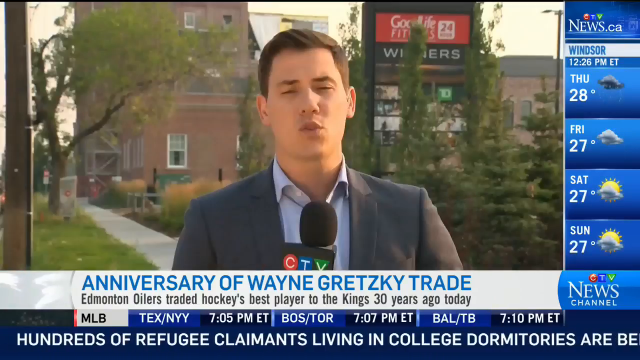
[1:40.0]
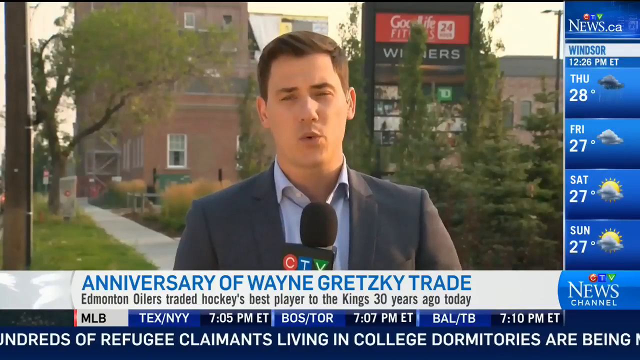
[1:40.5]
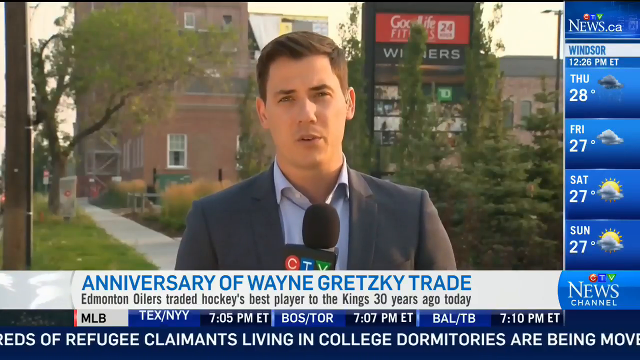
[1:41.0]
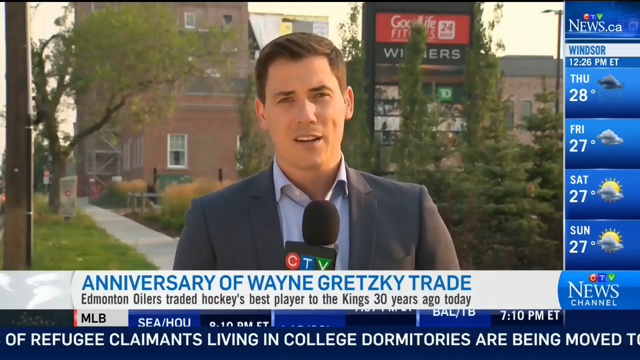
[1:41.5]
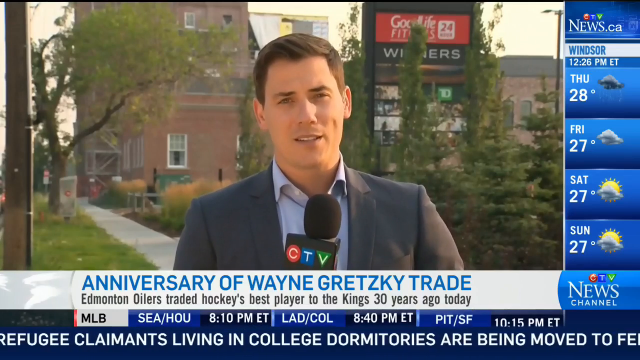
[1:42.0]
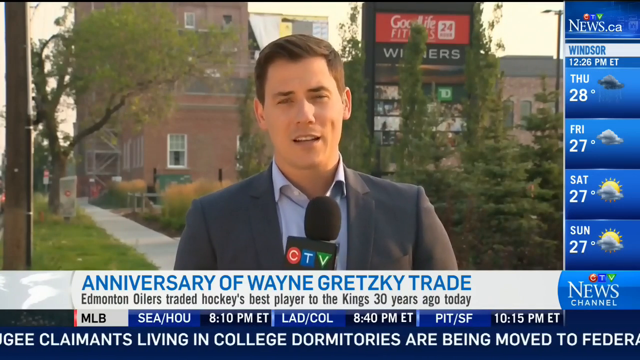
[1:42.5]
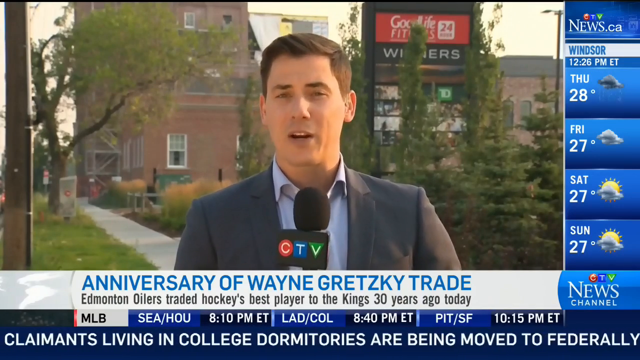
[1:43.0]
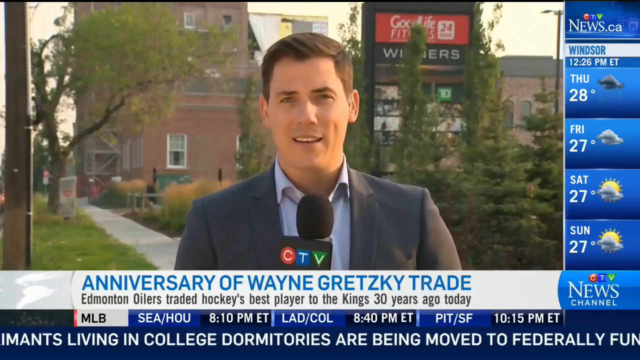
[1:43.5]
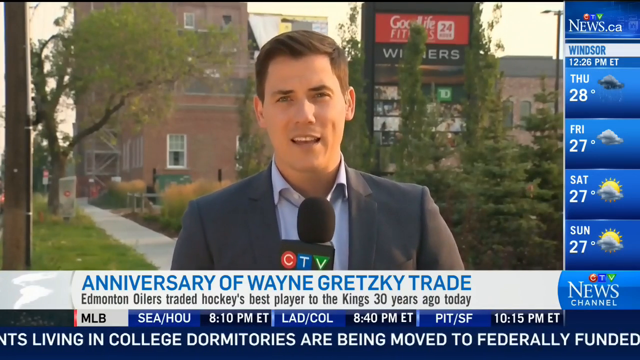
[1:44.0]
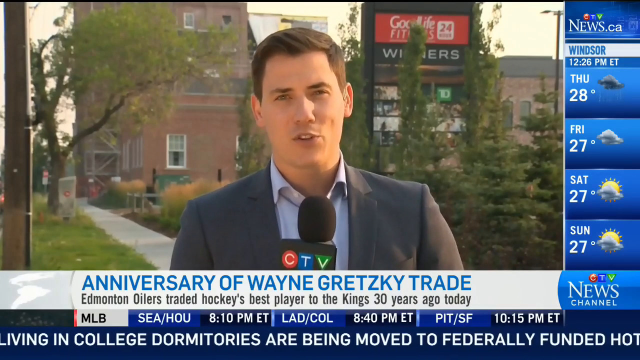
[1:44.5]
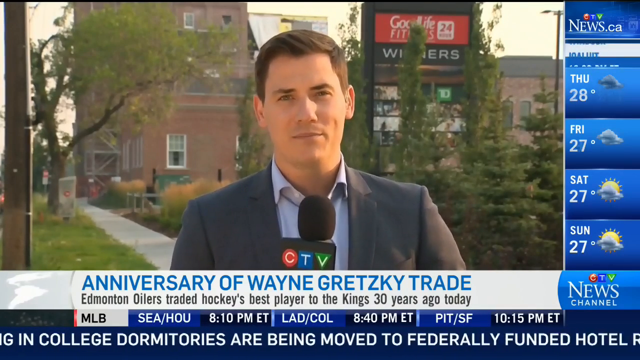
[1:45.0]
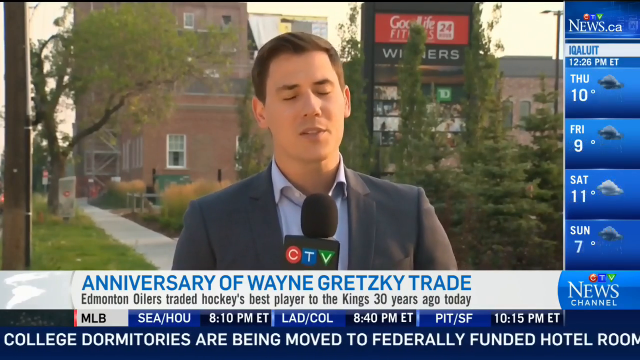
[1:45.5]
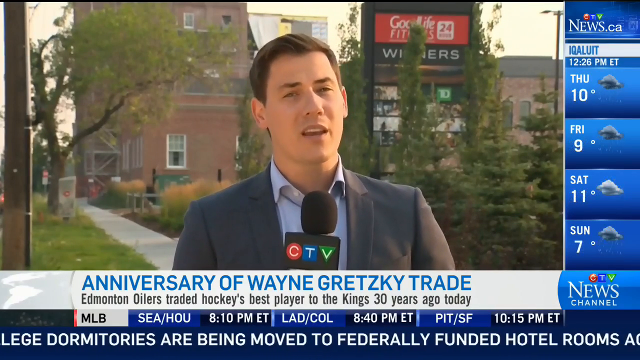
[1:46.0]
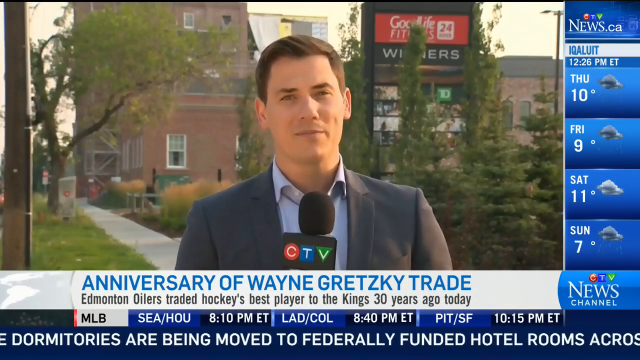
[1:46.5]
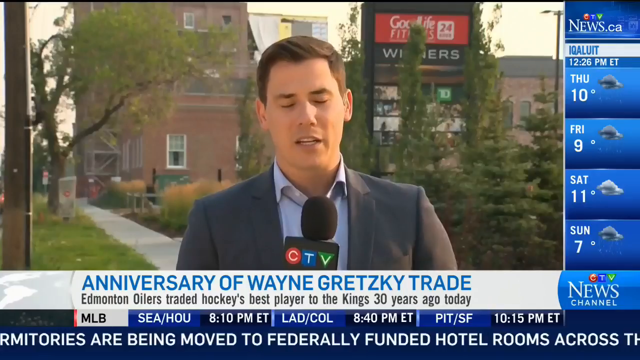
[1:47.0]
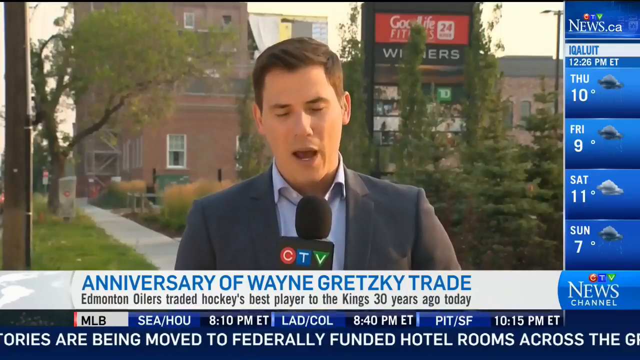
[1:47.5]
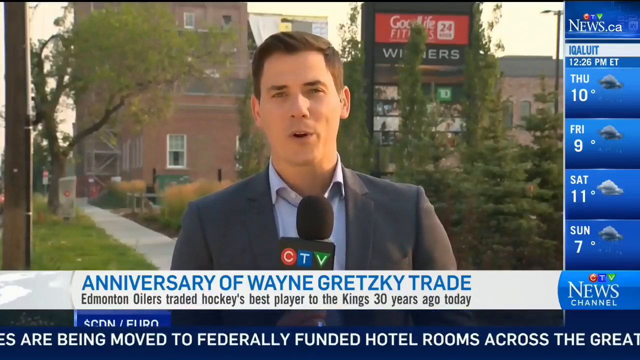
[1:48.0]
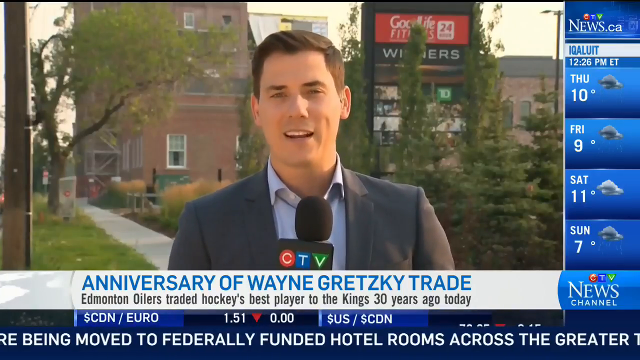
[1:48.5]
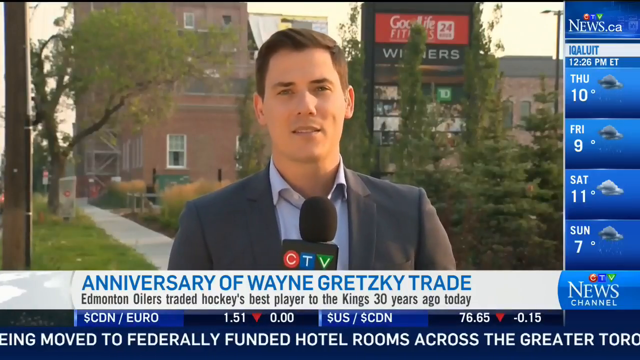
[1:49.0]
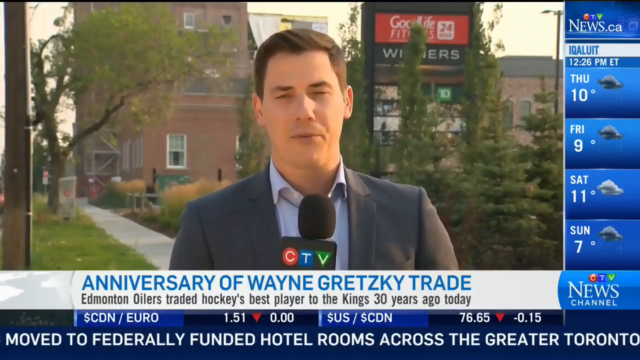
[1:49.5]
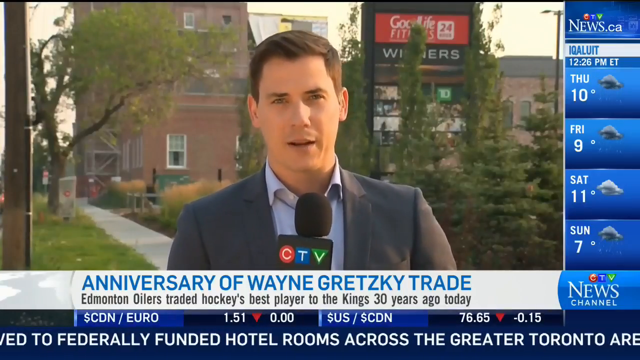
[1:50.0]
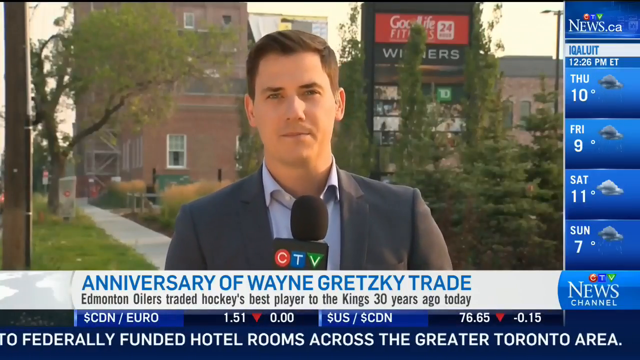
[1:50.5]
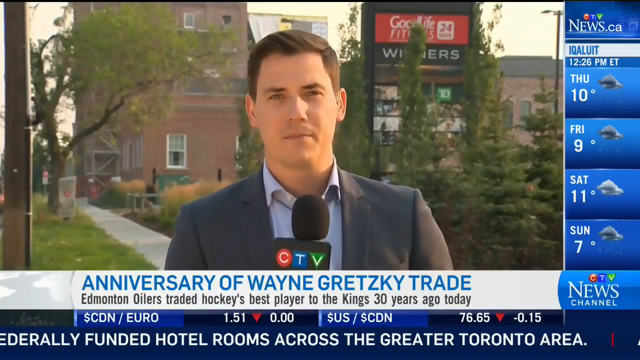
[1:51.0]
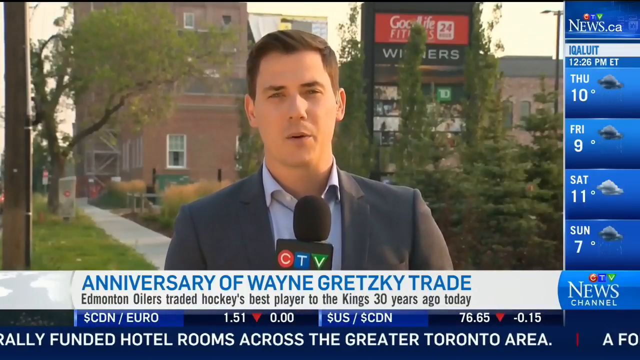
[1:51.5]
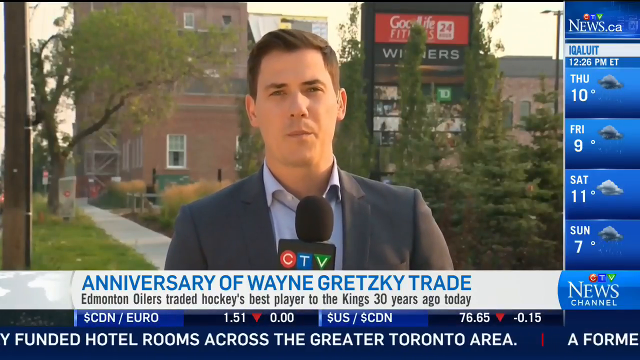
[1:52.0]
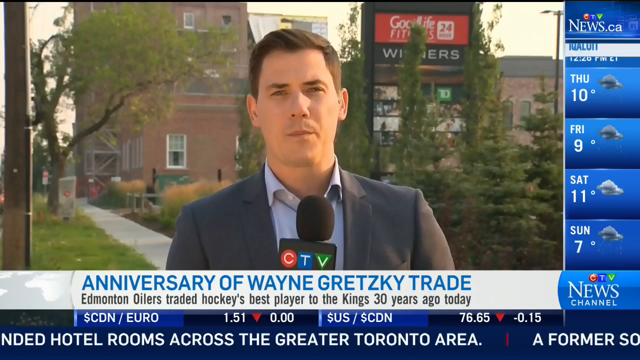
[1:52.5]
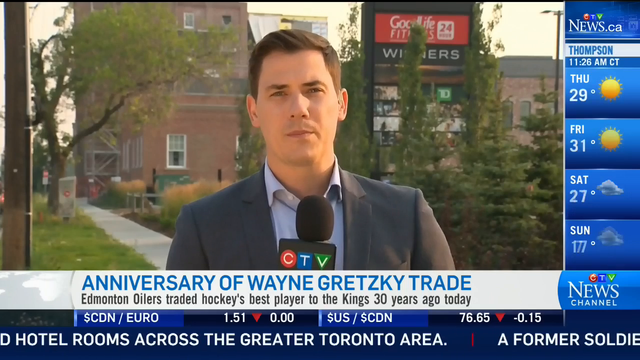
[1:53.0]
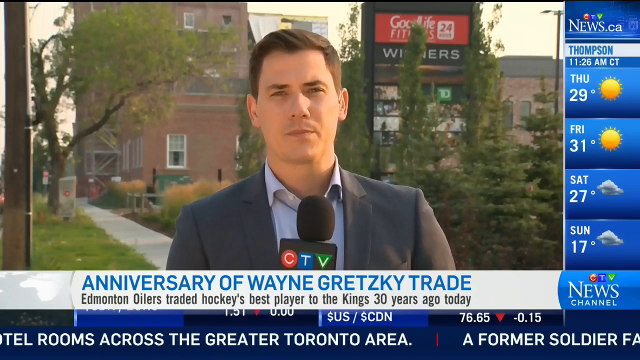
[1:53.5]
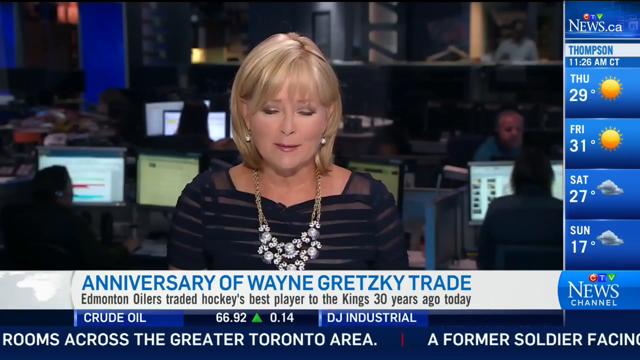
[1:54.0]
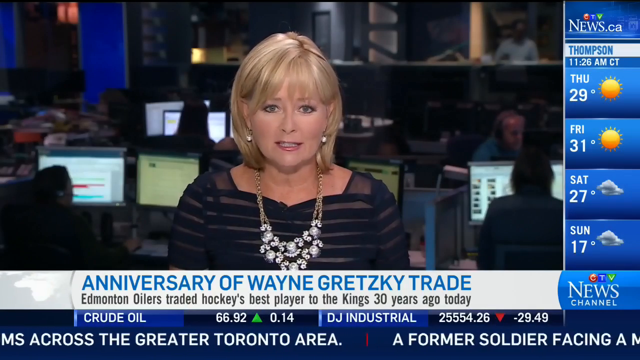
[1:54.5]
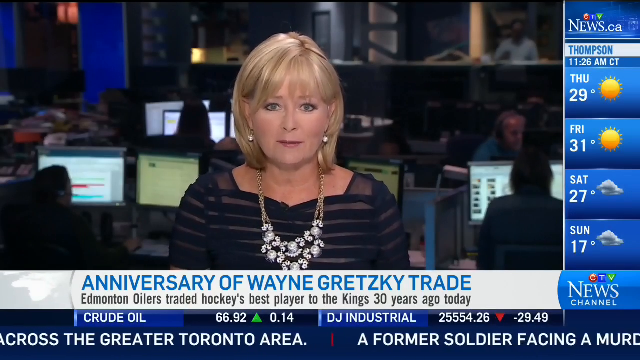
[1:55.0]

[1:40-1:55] The ticker at the bottom, which began with crude oil stock prices, now shows MLB scores, including a Seattle–Houston game with its time. The MLB section has a white box with "MLB" in black text on the left, a red vertical line, "Seattle" and "Houston" in white in a blue box, and the time in white on a navy background. The ticker then returns to Dow and other stock prices. The video goes from the correspondent back to the woman, who looks right at the camera. She is probably in her 50s, with short chopped hair curving down. Behind the standing correspondent, to his left, are some shorter pine trees that block part of the signs; the signs look like they are missing some panels. The apartment building rises high on the left side, about four stories, and comes down to maybe one or two stories toward the right in the distance. Between the pine trees, two arch-like windows are visible, and there is a street lamp on the right side.